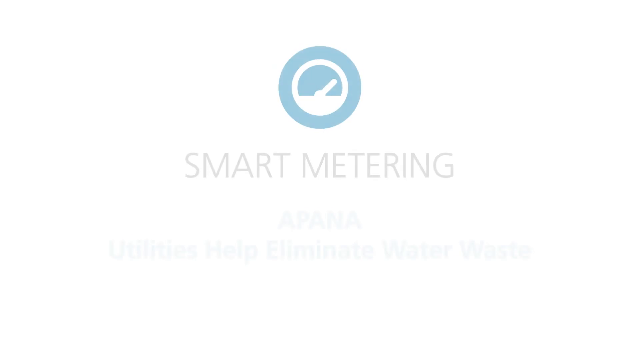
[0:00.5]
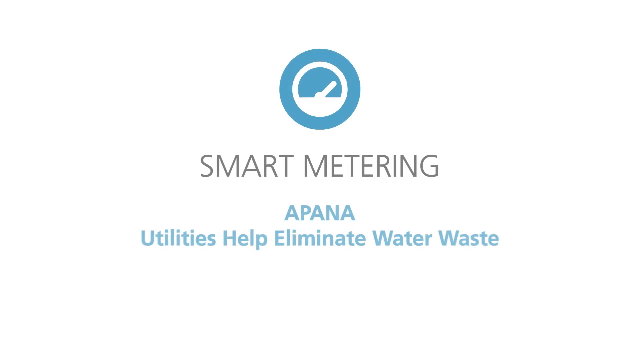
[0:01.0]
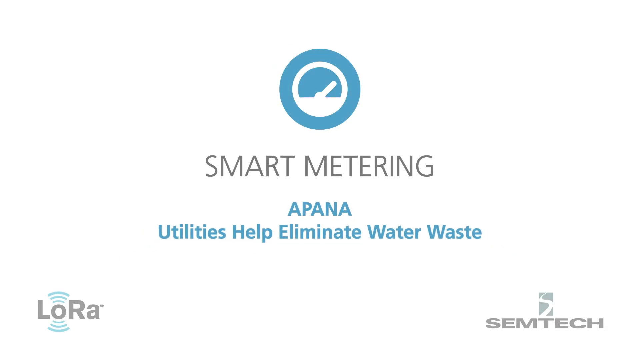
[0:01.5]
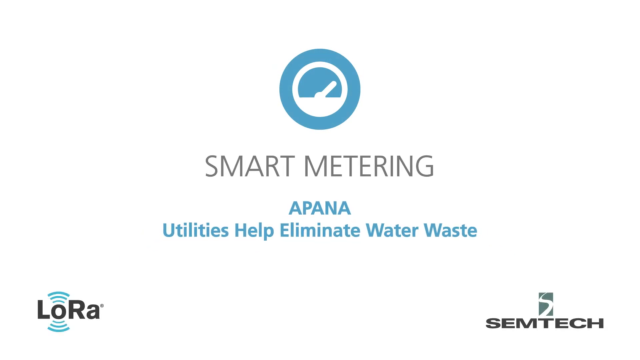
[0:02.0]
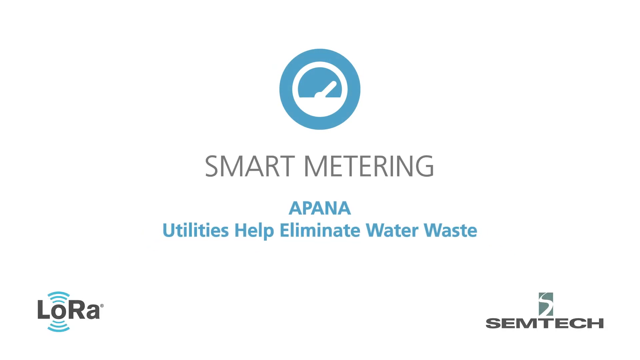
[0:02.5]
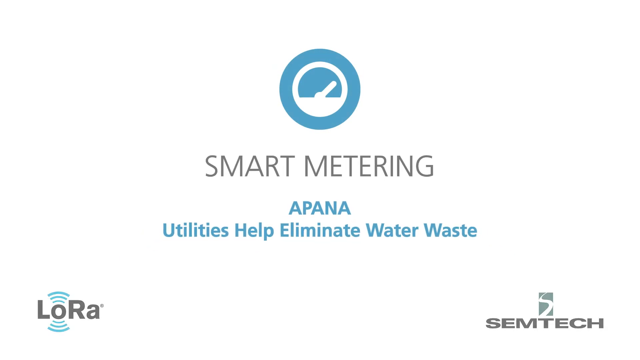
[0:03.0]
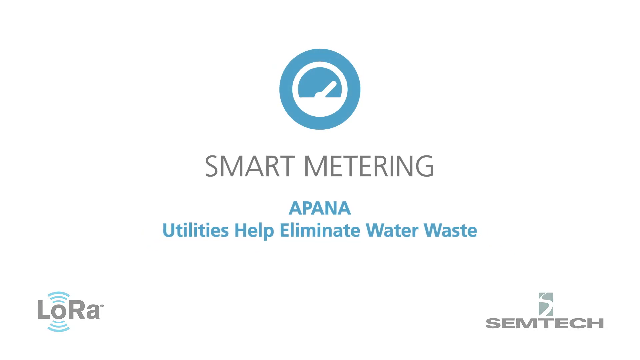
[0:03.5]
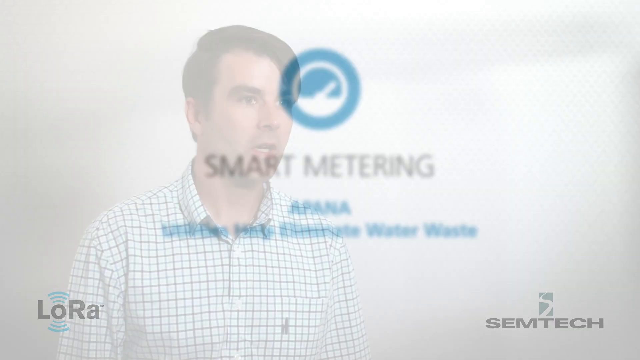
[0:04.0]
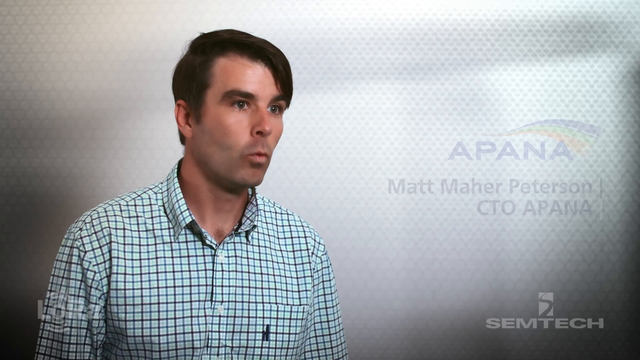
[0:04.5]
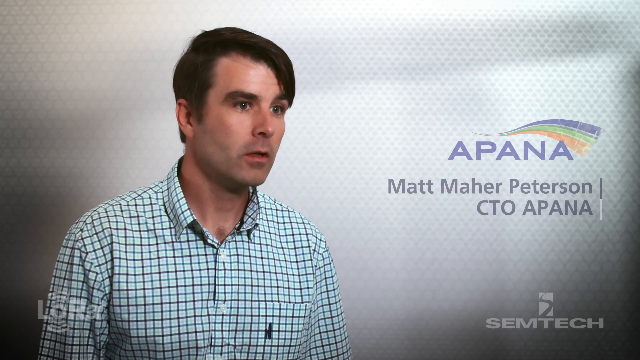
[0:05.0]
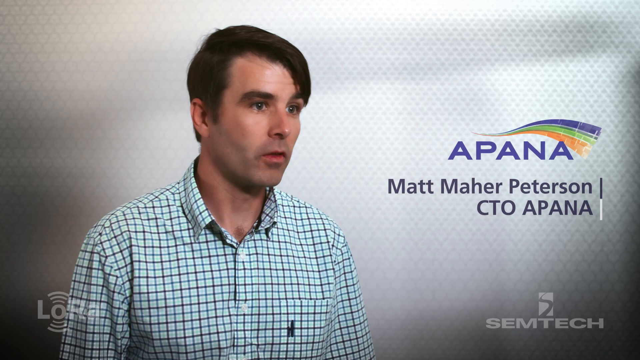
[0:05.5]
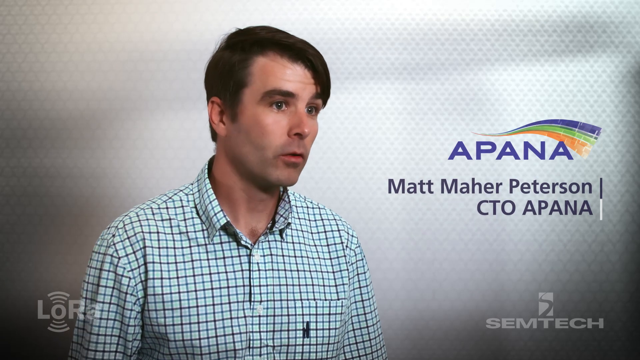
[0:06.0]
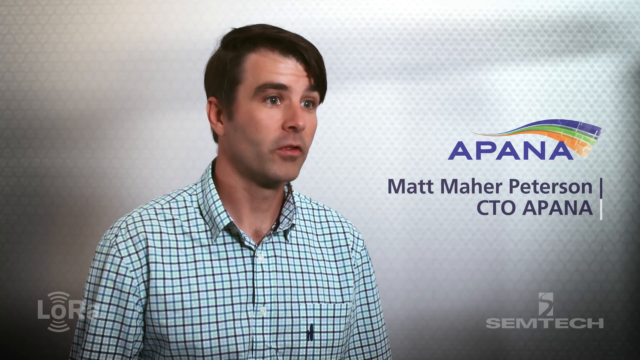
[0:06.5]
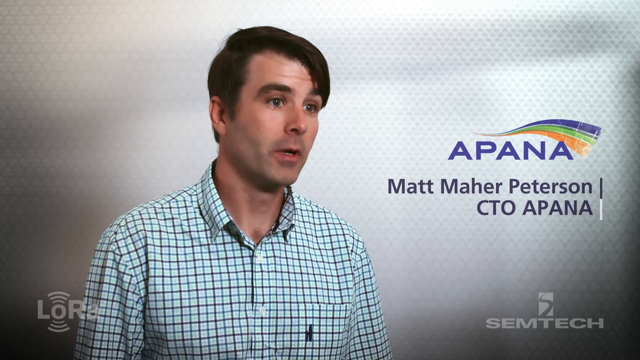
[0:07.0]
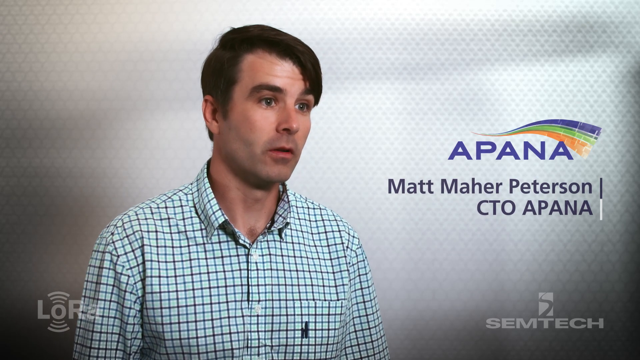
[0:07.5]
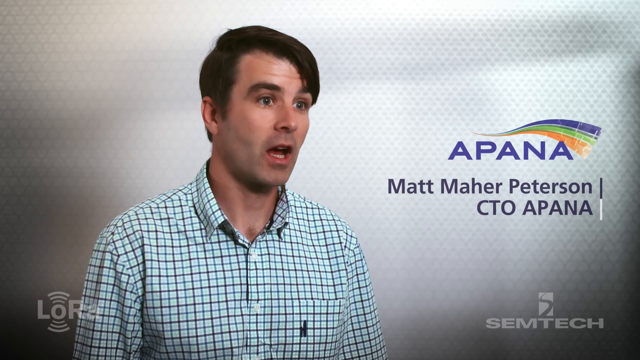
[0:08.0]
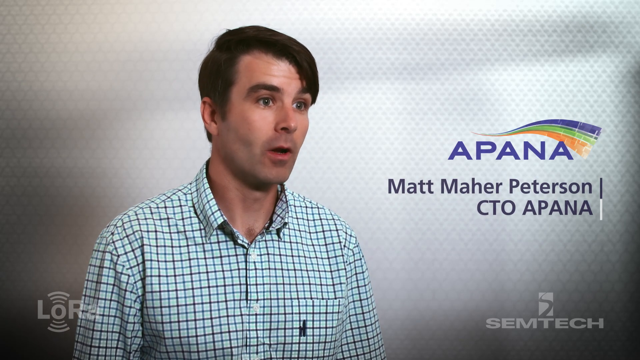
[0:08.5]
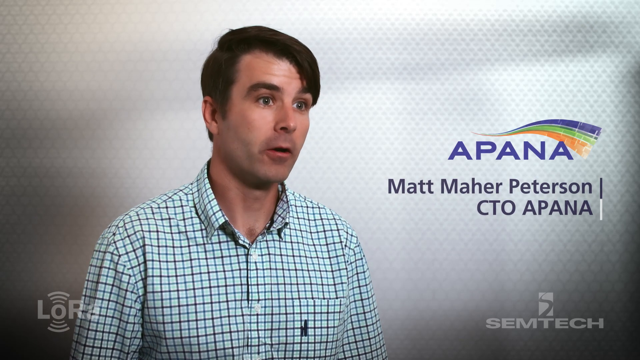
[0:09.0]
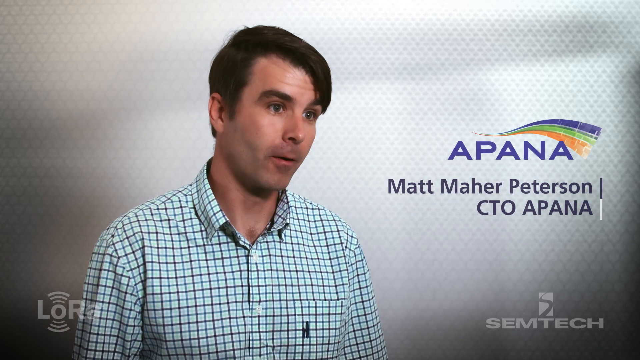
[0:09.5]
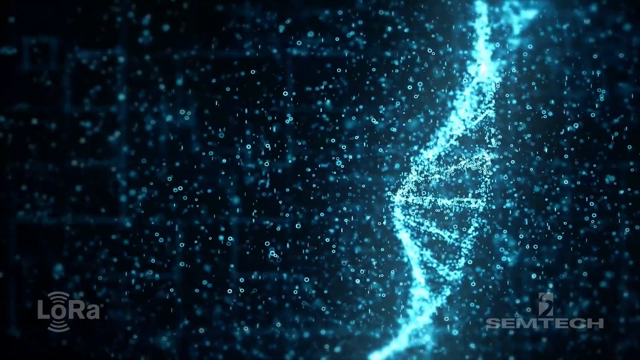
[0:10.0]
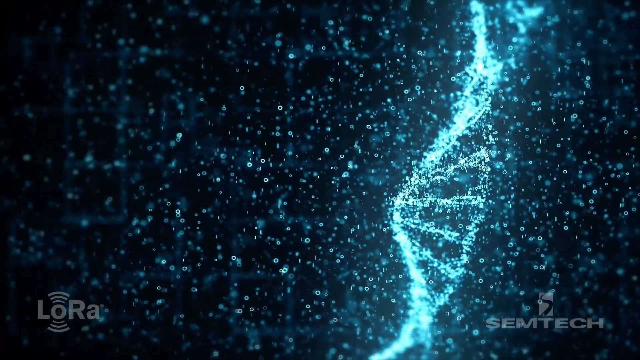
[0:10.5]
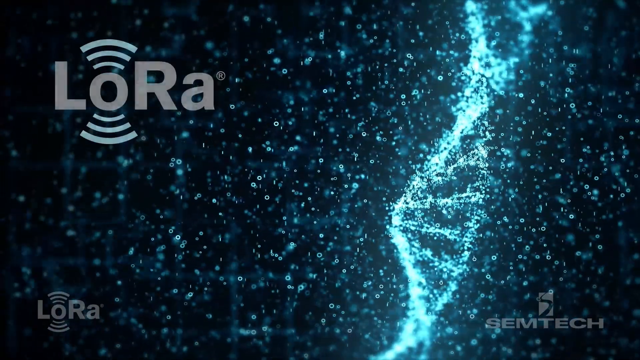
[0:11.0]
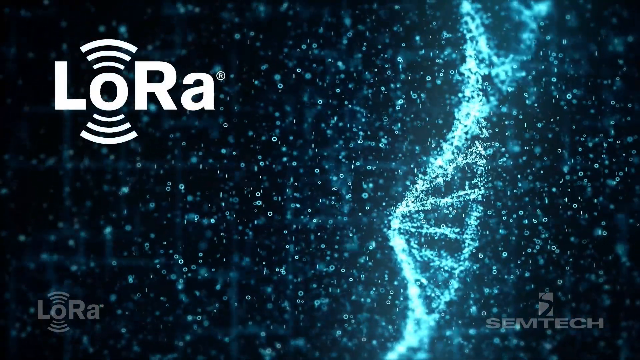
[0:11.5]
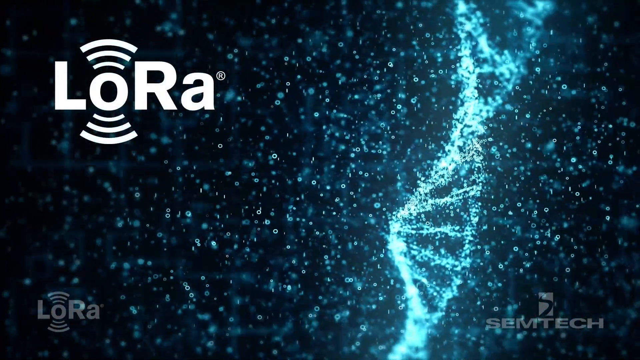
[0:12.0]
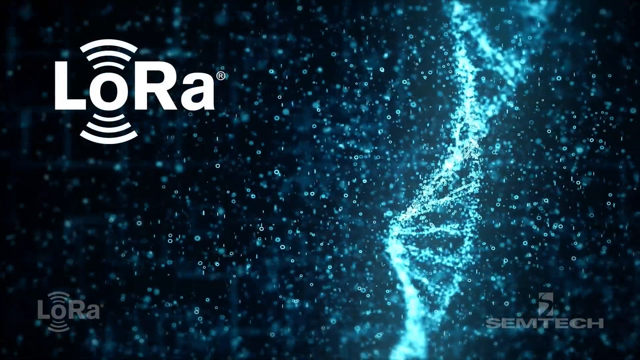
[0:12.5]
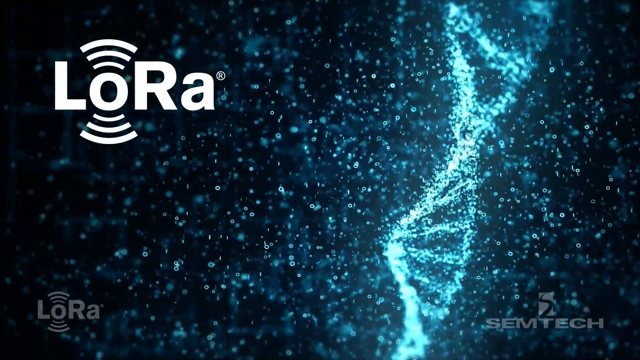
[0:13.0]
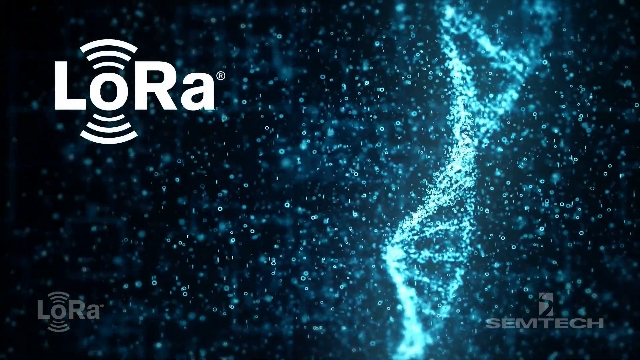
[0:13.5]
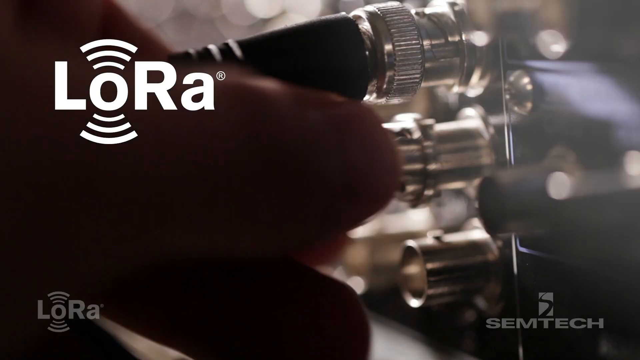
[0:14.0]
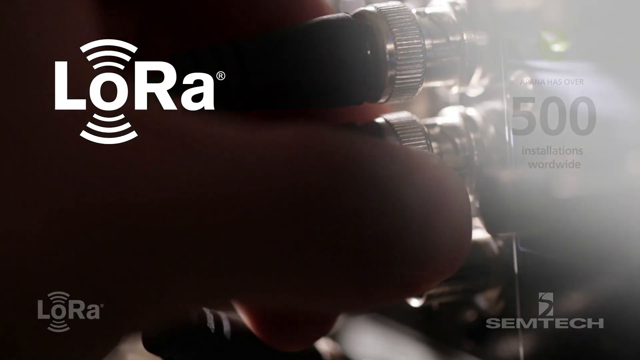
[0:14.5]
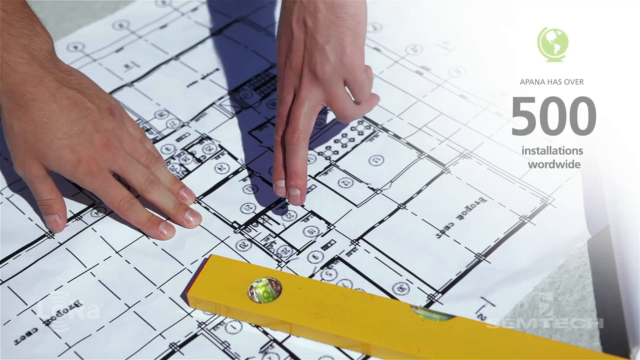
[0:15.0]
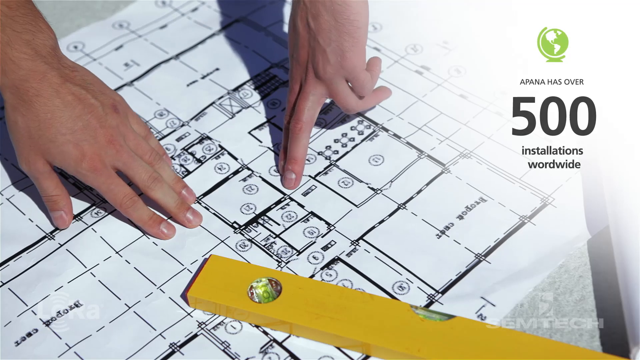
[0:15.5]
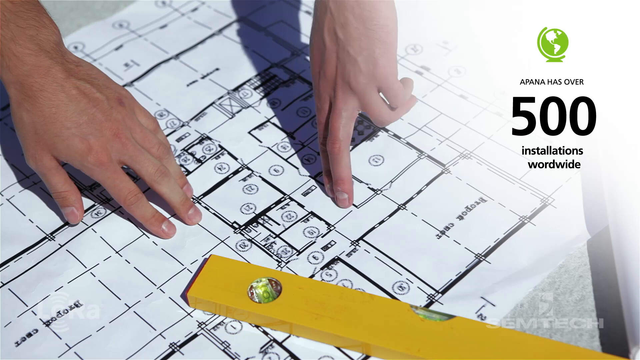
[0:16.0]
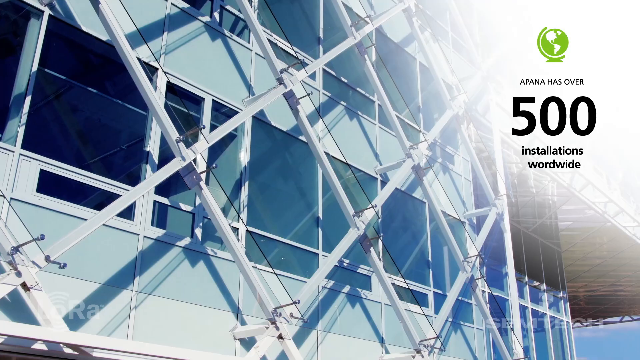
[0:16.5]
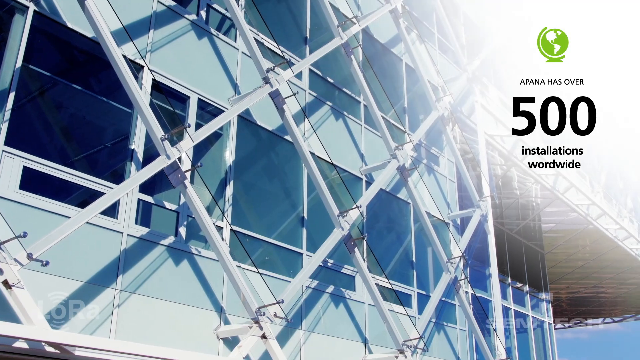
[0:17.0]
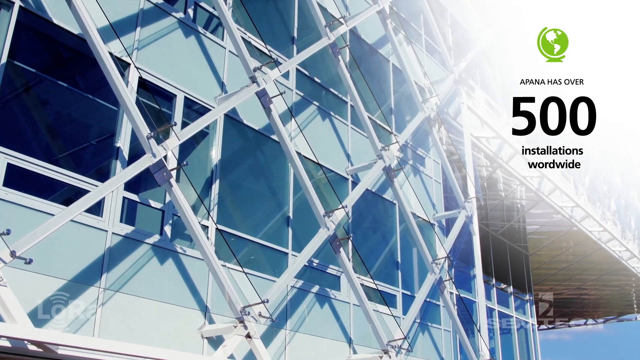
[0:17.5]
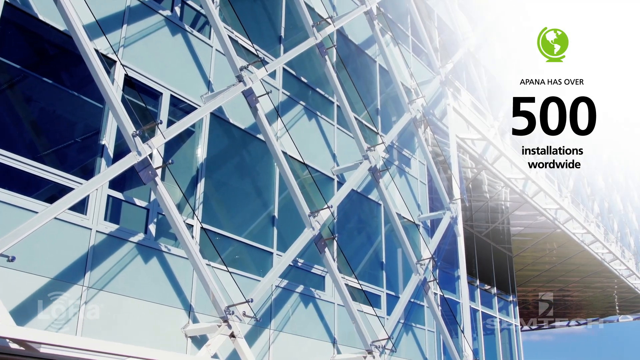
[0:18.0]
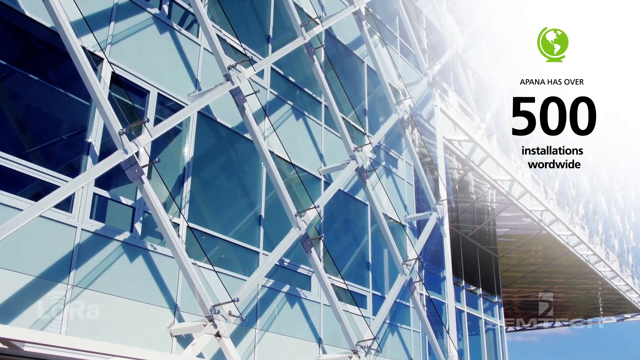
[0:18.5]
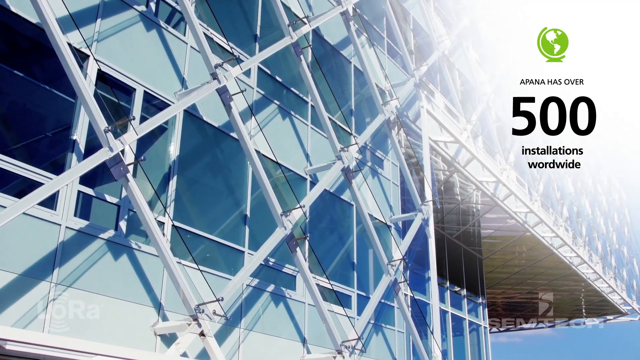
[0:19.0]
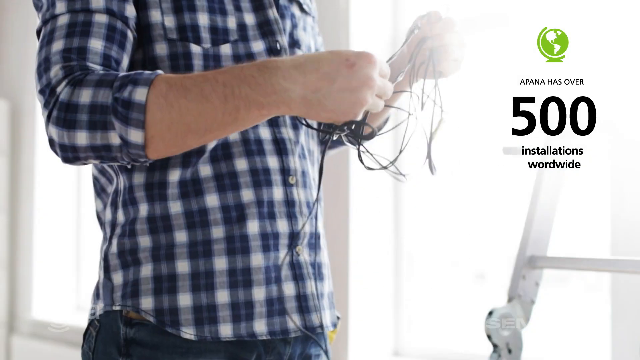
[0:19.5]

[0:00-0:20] The video opens on a white background with a blue sphere at the top containing what looks like a meter in white. Beneath it, black lettering reads "smart metering." Below that, in blue or green lettering, is "APANA," and beneath that, "utilities help eliminate water waste." "LORA" appears in the lower left-hand corner and "SEMTECH" in the lower right-hand corner. A man in his late 30s with dark hair and dark eyes appears, wearing a long-sleeved, green checkered button-down shirt. "APANA" appears in big purple letters, followed by his name, Matt Mayher Peterson, CTO of APANA. The Semtech watermark is beneath that. The background where he is speaking is white.